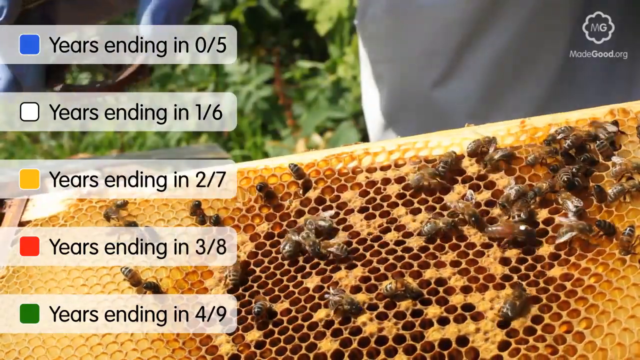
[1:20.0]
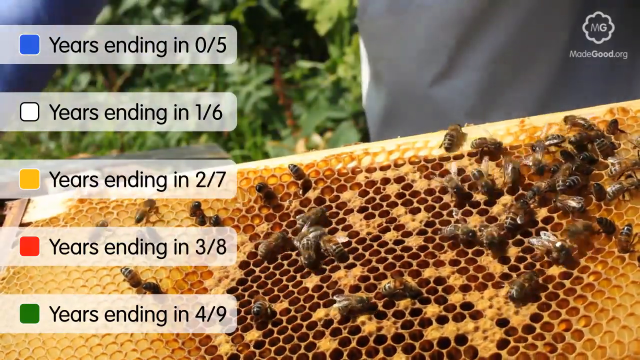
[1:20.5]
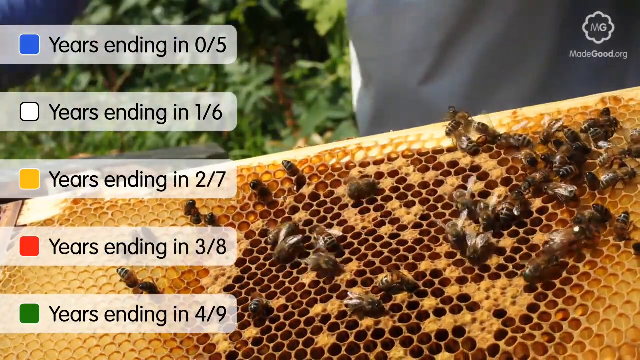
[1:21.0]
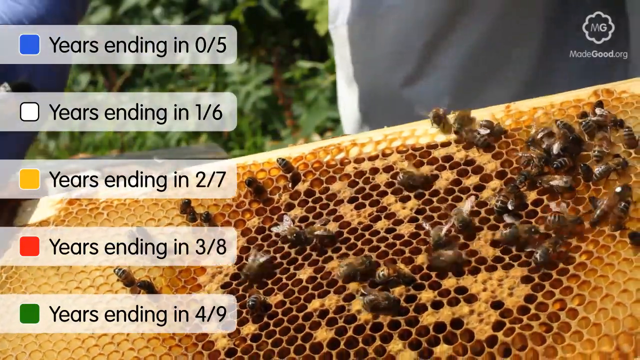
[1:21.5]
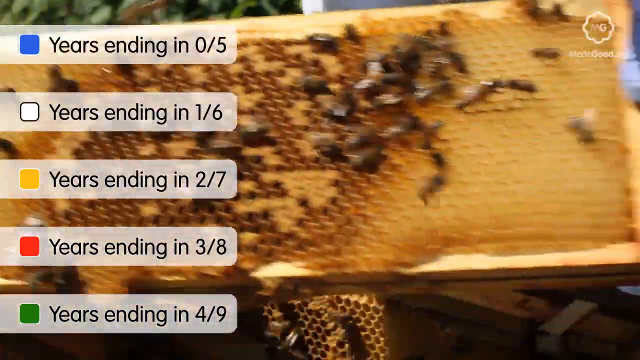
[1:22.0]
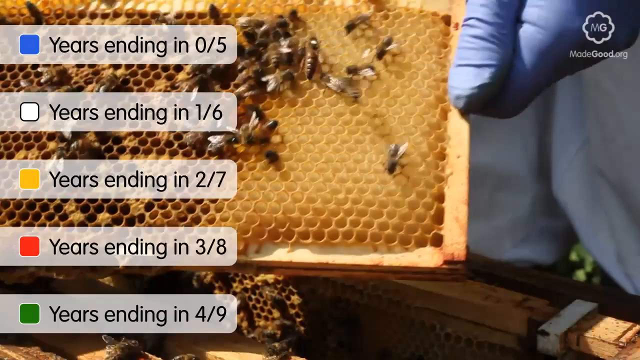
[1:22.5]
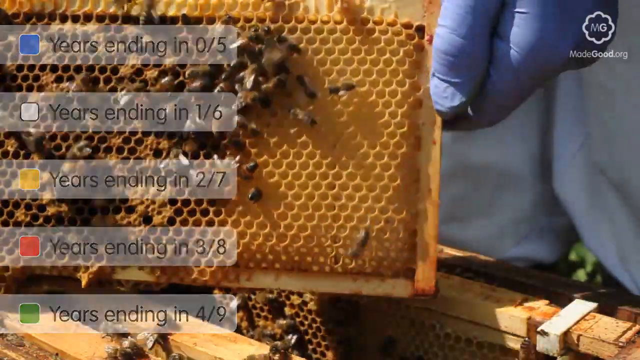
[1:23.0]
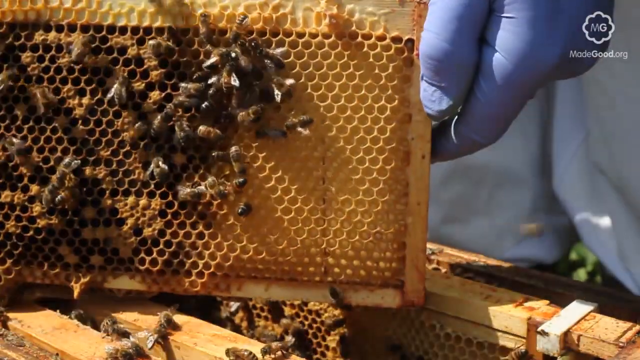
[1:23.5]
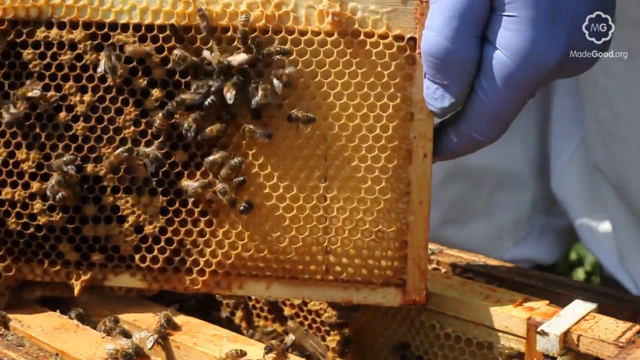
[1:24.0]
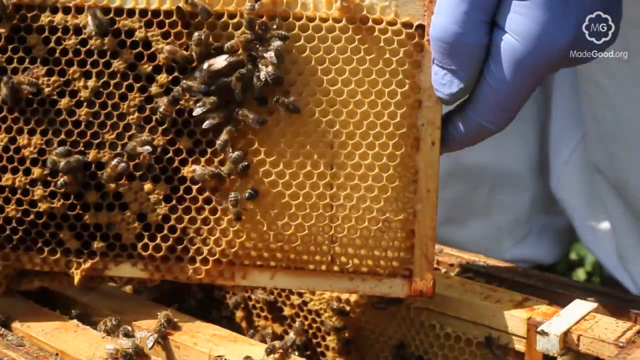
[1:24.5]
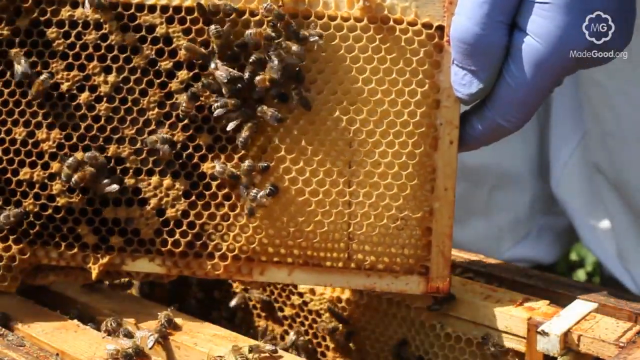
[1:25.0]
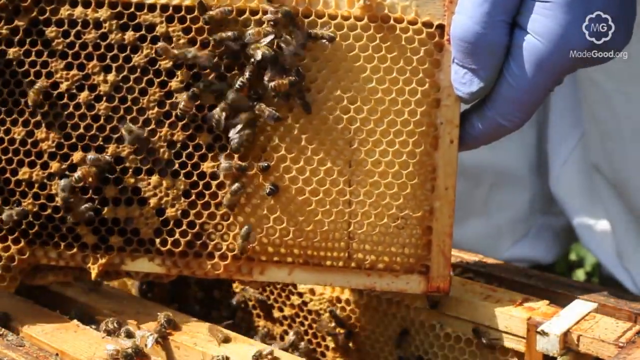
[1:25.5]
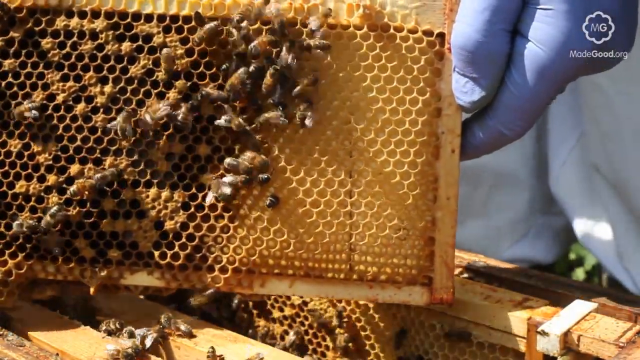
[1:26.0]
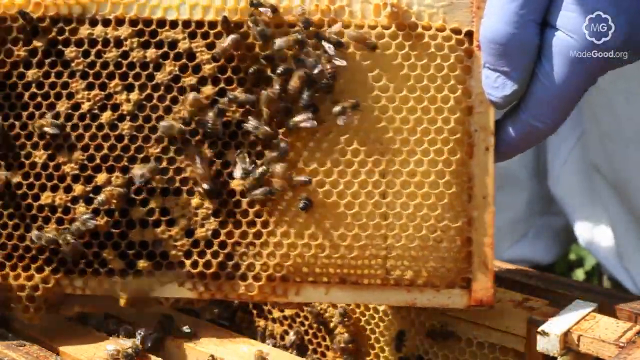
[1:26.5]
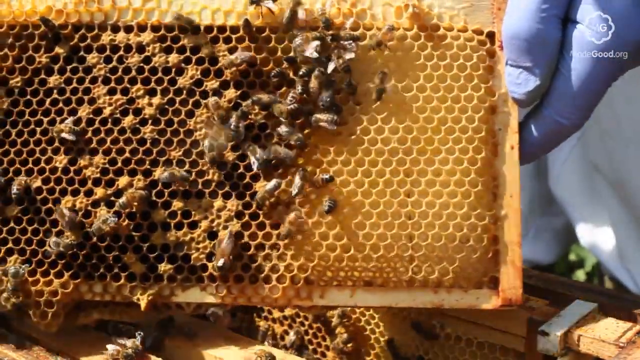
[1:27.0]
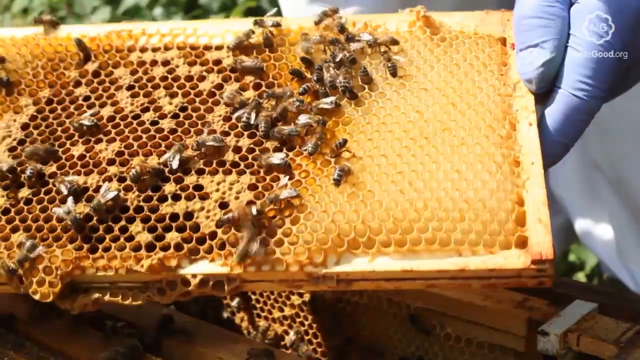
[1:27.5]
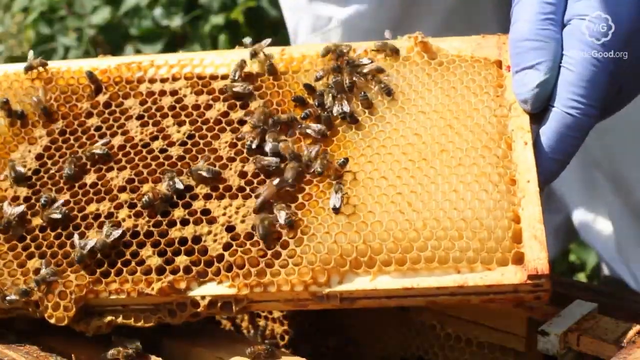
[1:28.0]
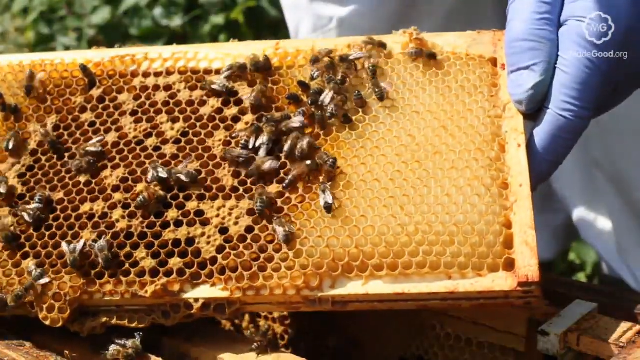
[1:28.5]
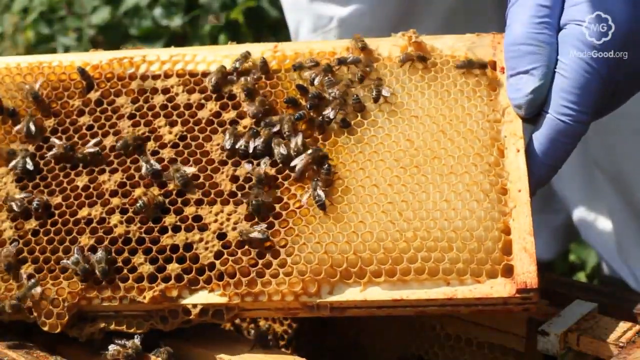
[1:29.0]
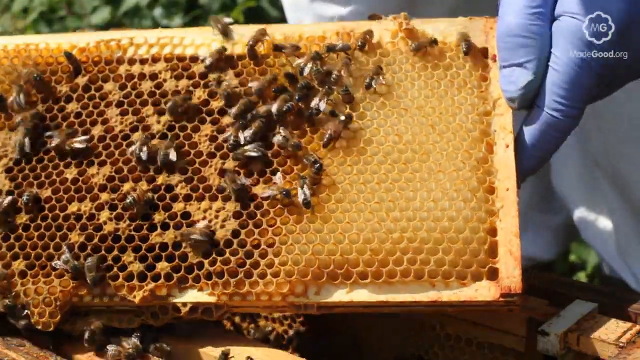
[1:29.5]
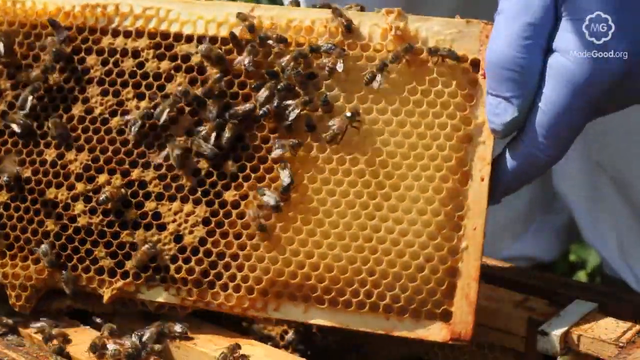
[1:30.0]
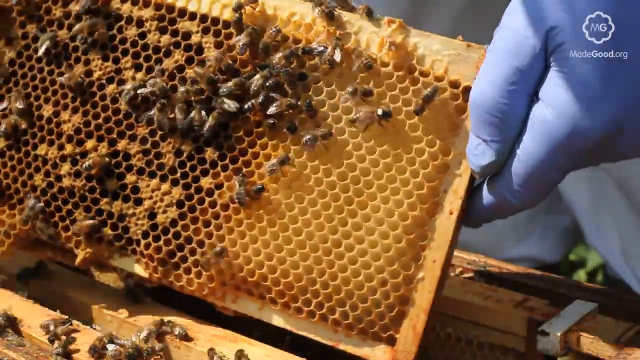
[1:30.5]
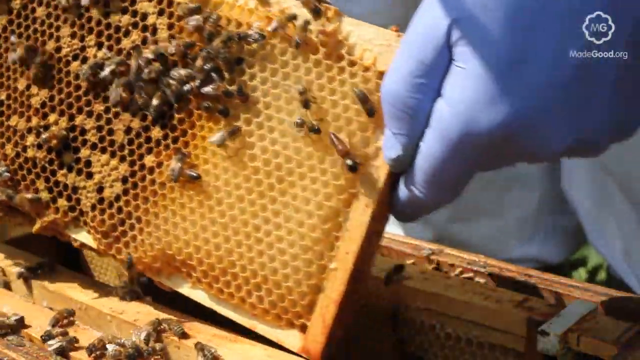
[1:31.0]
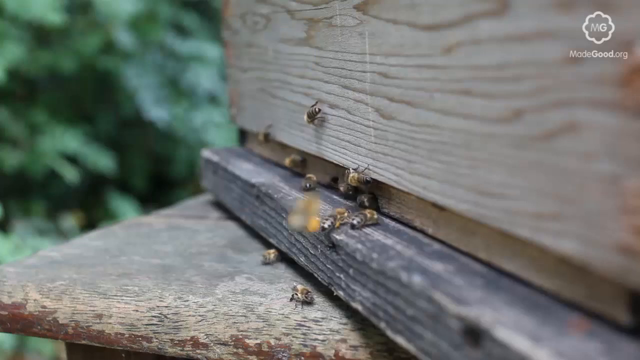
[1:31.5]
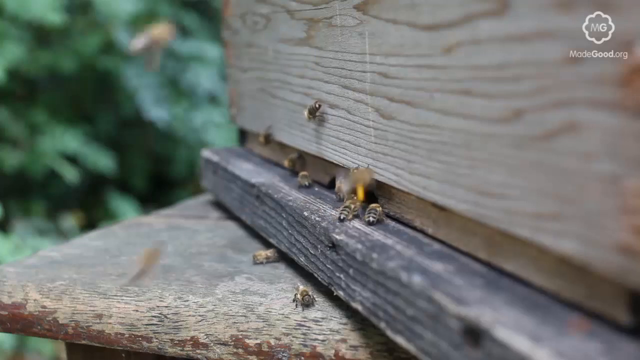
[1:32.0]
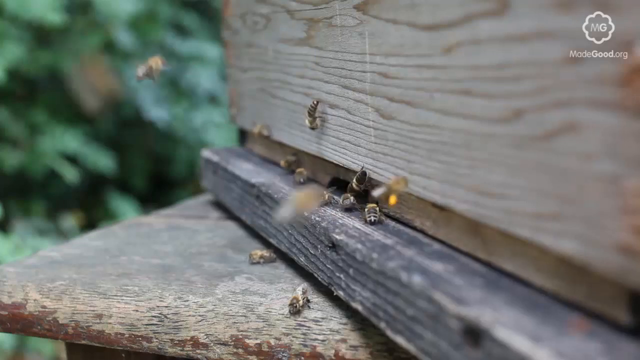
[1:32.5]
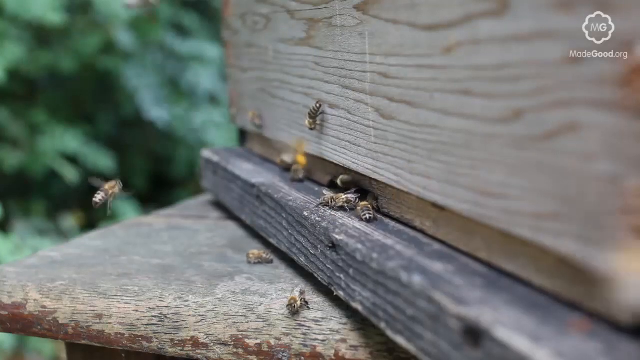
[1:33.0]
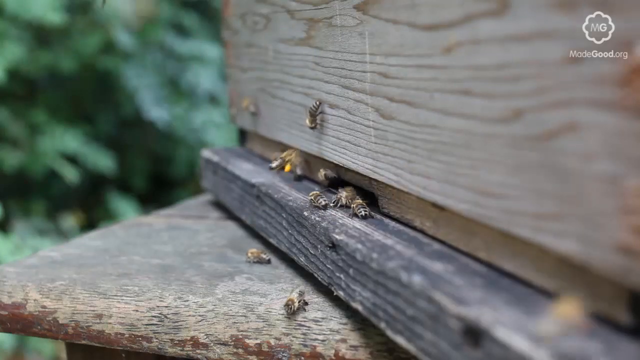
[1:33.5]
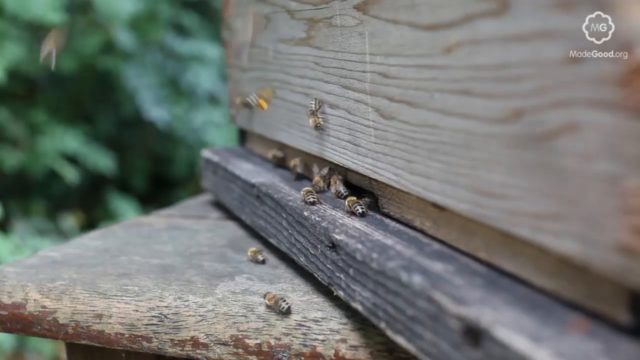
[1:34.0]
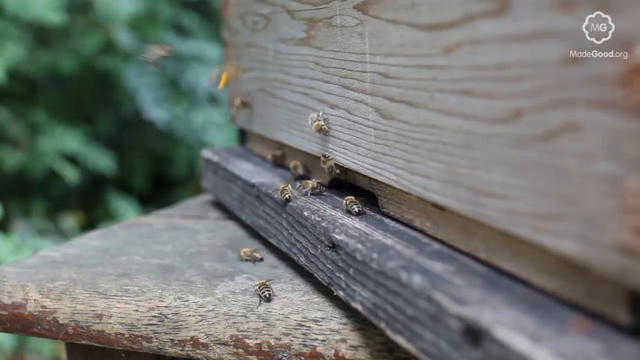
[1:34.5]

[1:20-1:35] The person in a purple glove slightly tilts the device so it kind of faces downward, and a few bees seem to crawl off, but most remain toward the center. The video then cuts to bees landing on a light-colored piece of wood with a darker wood piece below it, where more bees are crawling. One appears to be swarming, kind of like when bees are about to build a nest, and it apparently has a very vivid yellow wing or center. The bees appear to be maybe trying to build a nest or go into a nest around this piece of wood. There is some green in the background, so this is somewhere in nature, on a piece of wood that is slightly elevated.